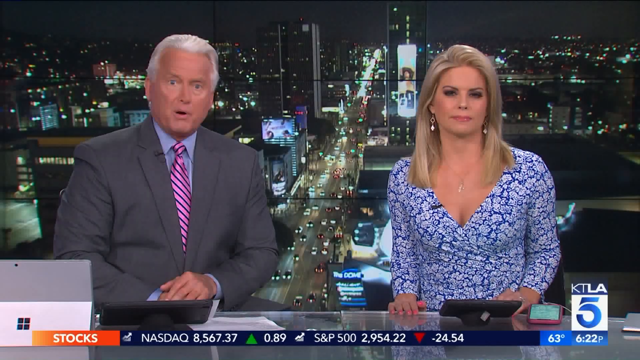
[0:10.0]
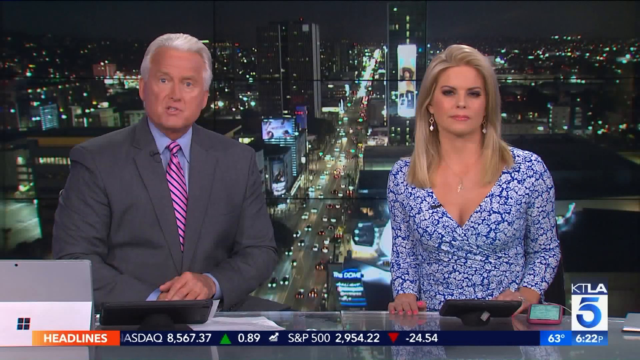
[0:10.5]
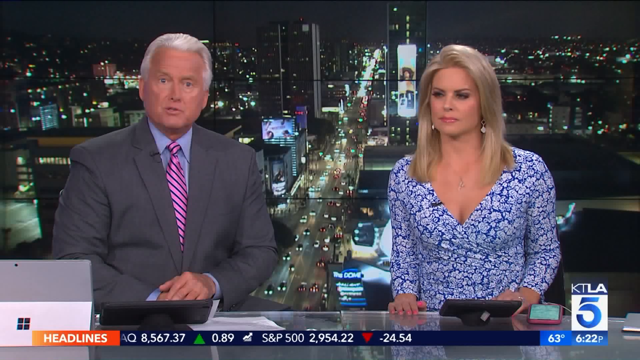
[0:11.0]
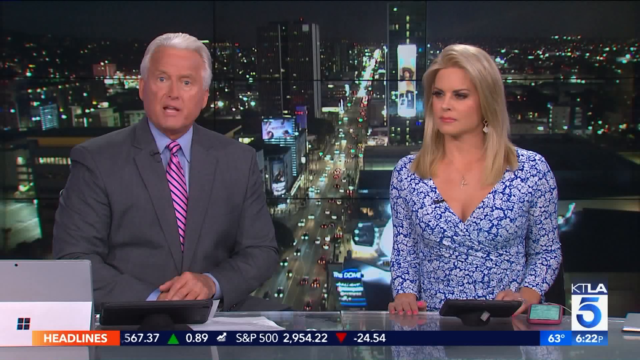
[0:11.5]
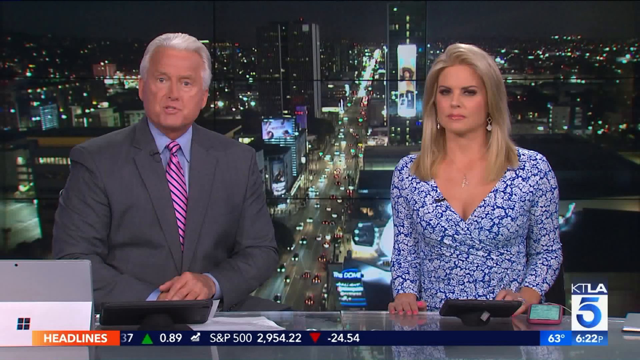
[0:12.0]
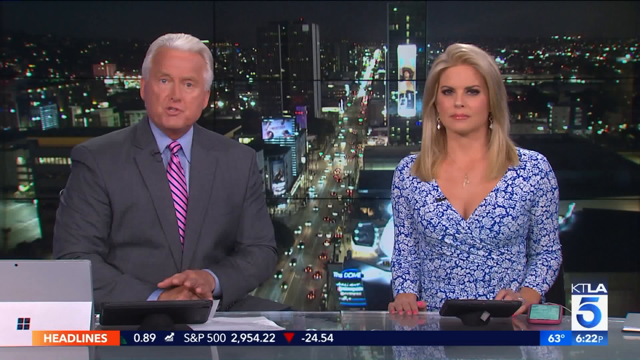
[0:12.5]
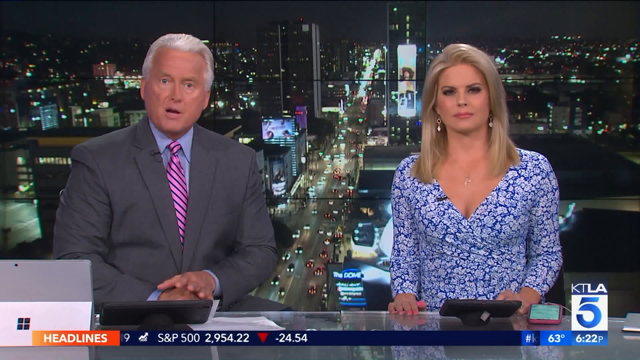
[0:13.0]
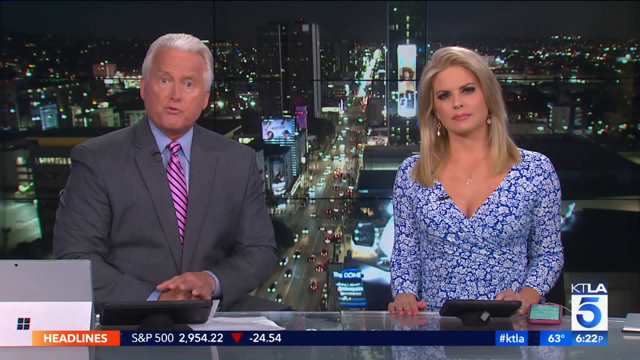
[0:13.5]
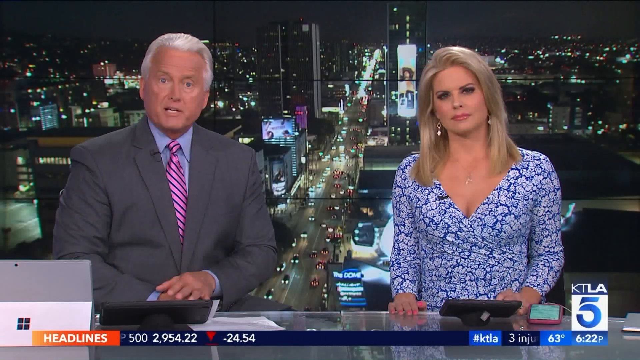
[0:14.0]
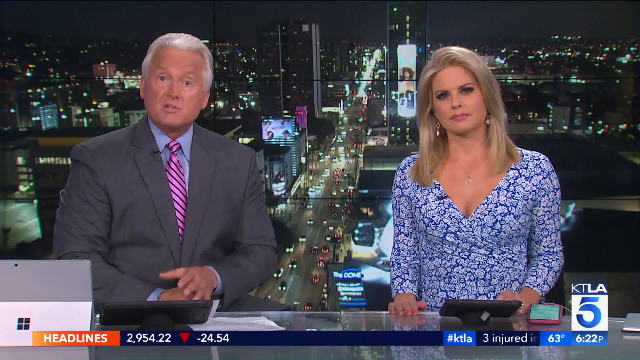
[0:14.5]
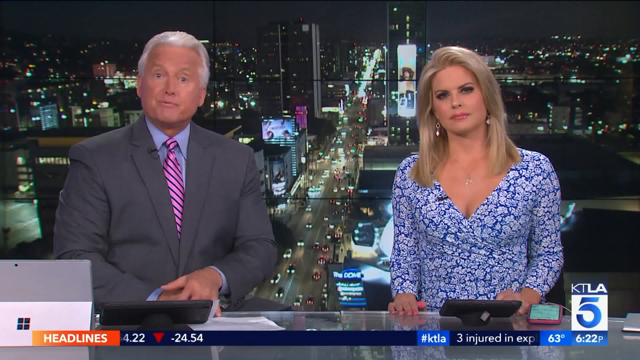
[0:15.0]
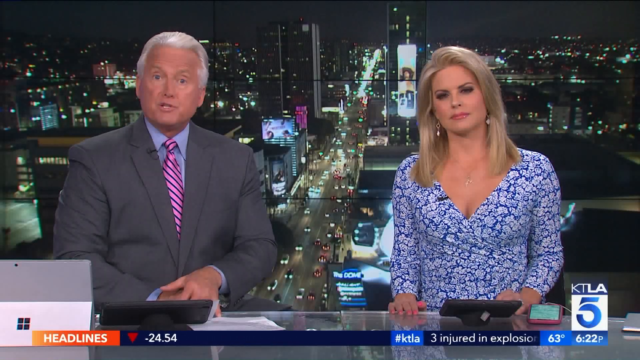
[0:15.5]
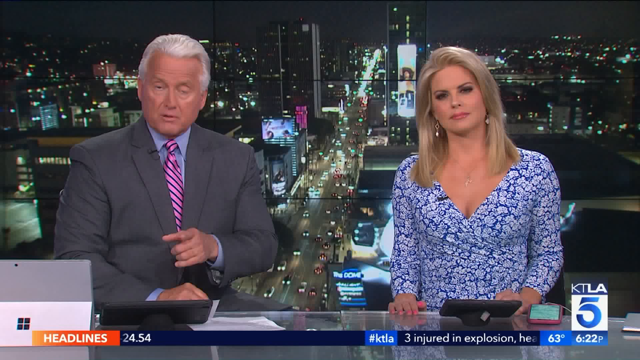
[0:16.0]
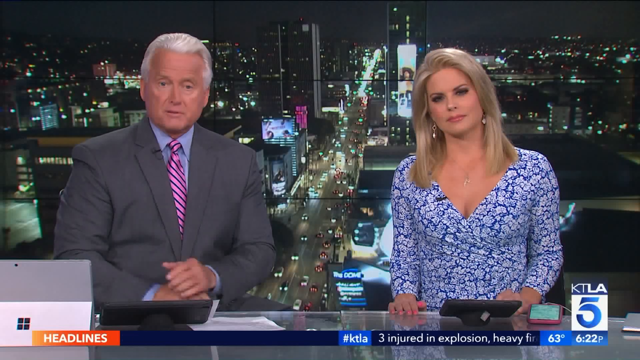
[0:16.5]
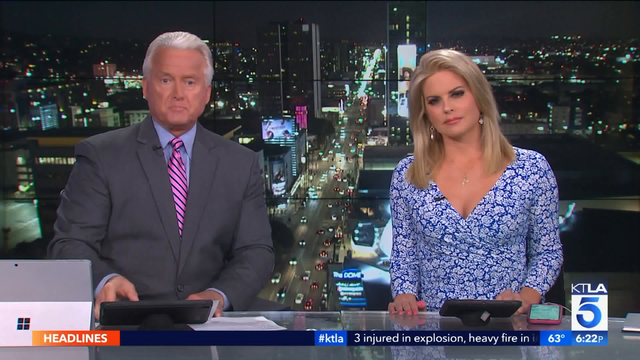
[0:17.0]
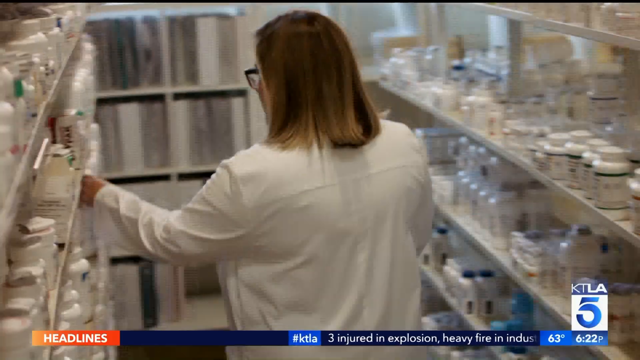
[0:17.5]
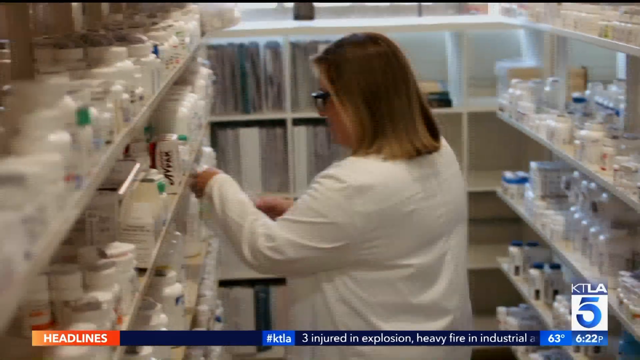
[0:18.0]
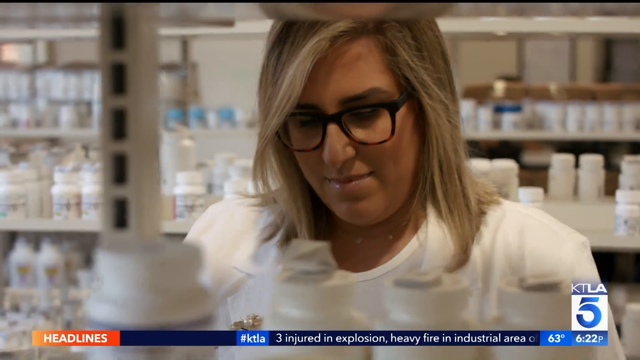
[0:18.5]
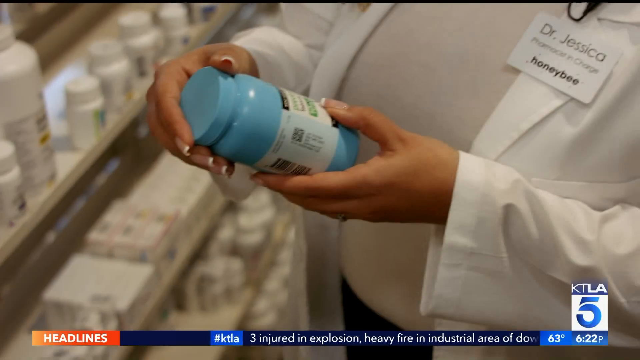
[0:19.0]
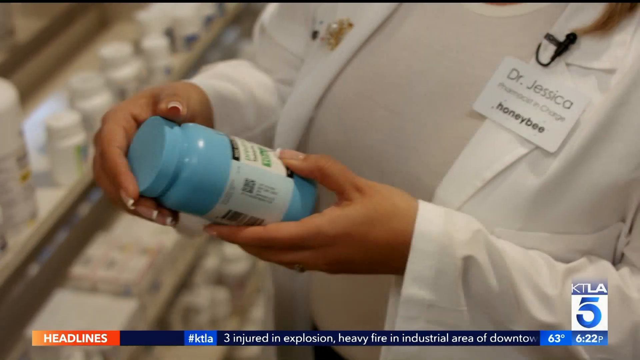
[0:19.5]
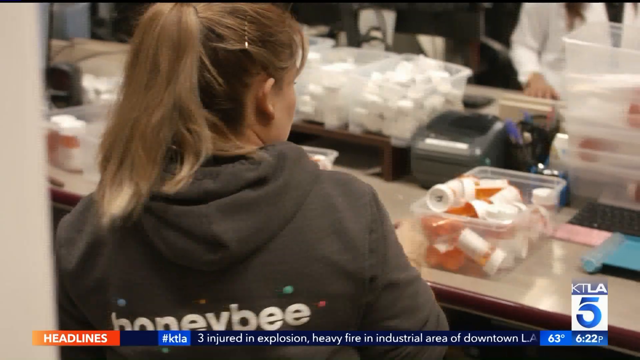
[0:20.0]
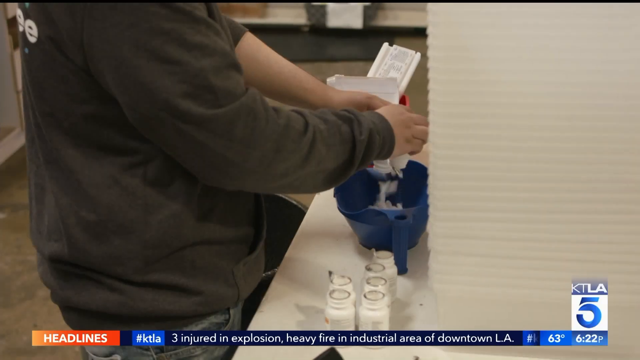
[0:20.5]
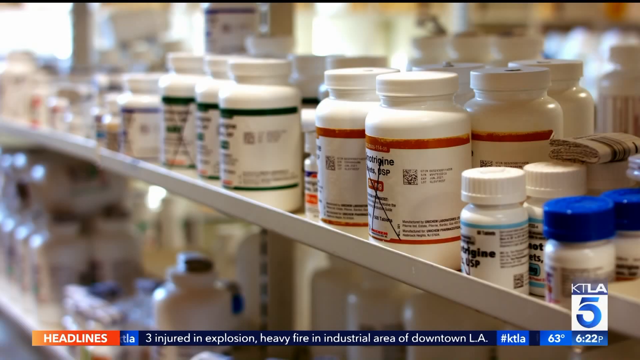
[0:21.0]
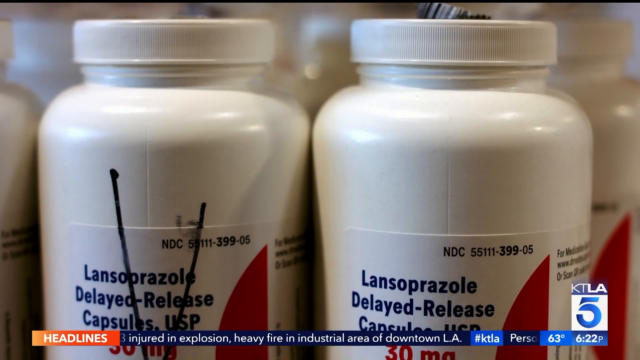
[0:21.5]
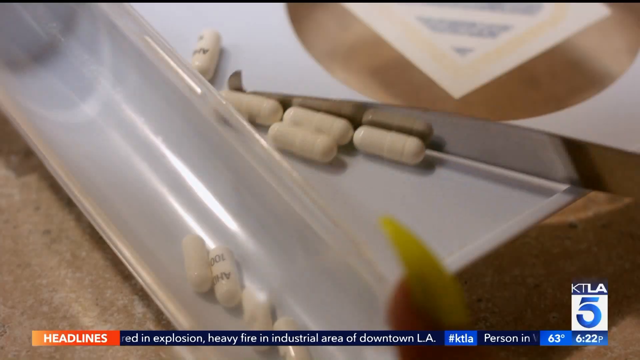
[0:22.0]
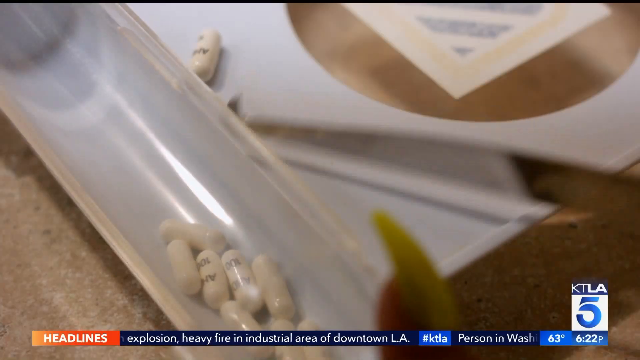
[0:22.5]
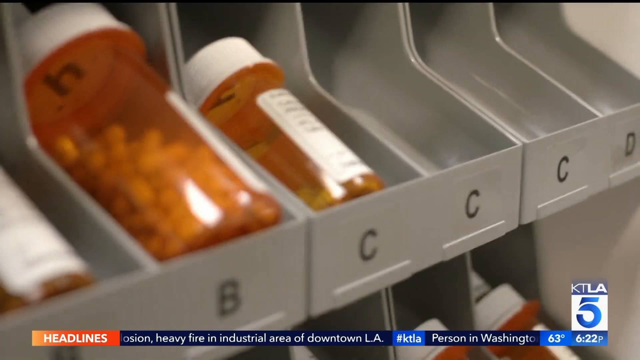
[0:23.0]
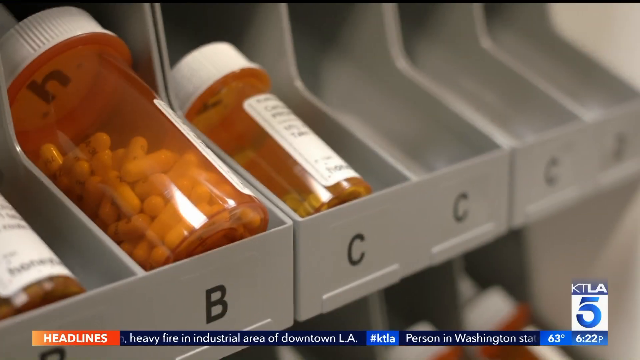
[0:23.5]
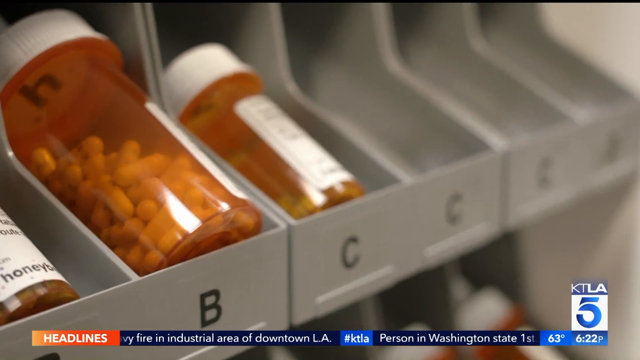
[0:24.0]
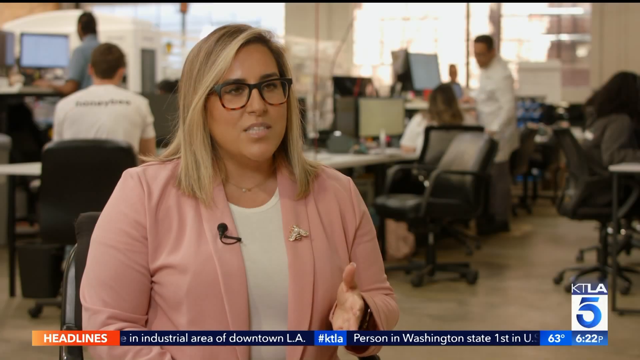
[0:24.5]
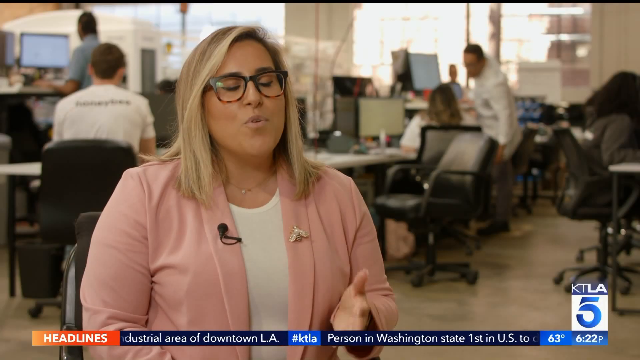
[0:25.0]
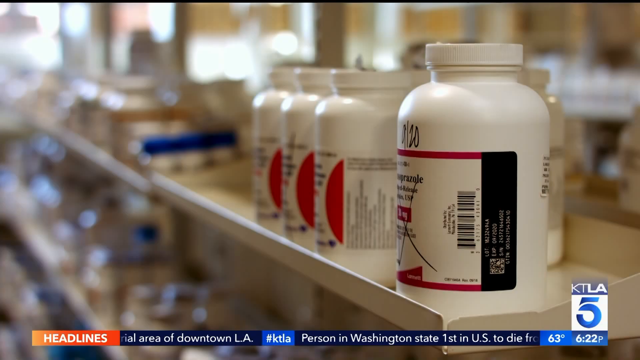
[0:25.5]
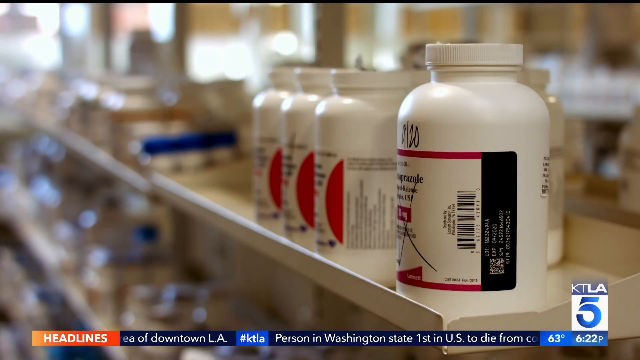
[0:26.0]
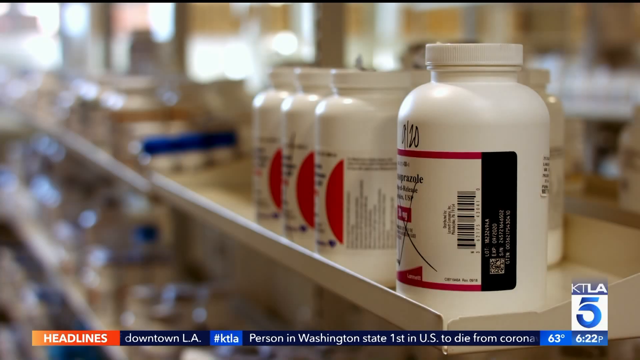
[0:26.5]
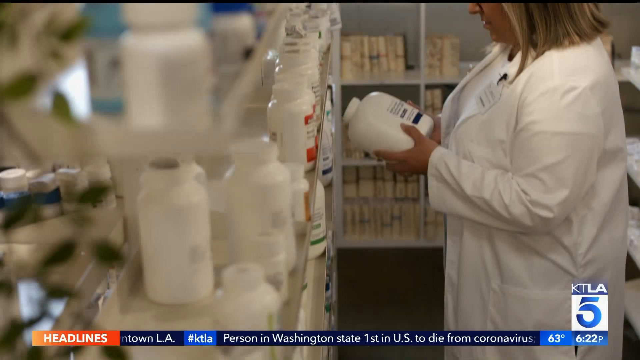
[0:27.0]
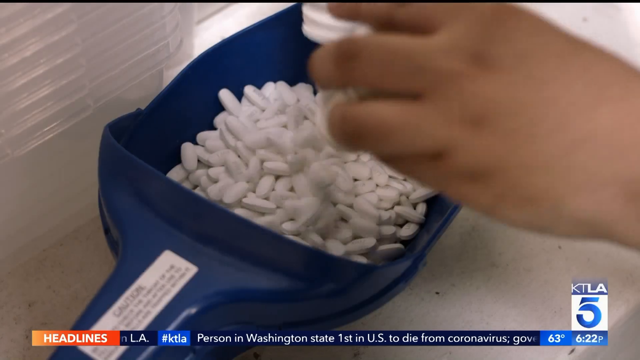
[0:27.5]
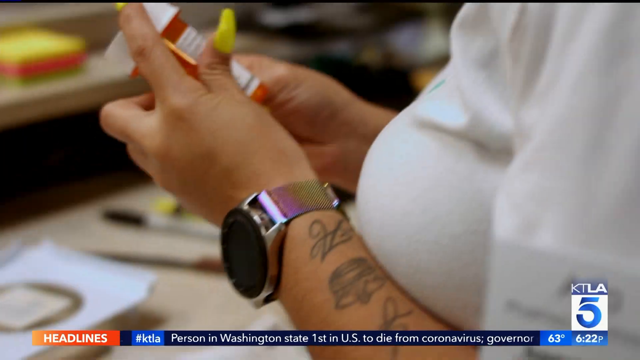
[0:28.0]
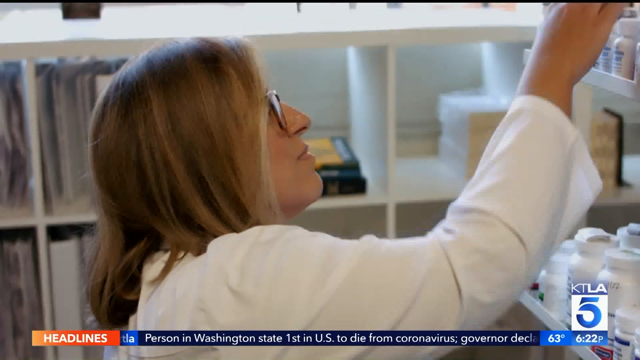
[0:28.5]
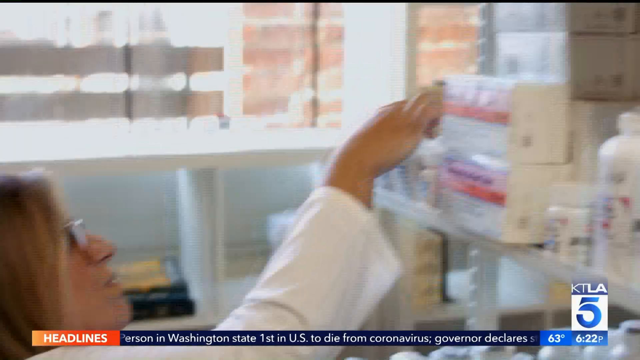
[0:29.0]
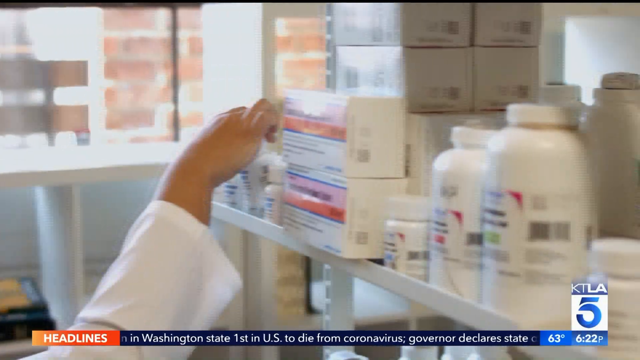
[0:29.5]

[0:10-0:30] The male and female news anchors sit at the desk. The man is talking; his hands are folded on top of each other before he lifts one and points off to move the segment on. The scene shifts to a pharmacy with rapid-fire shots of people sorting and counting pills. A woman with large-frame glasses appears in a white lab coat. The images show many pharmacy products, pill bottles on shelves, and pills being dumped out. A pharmacist picks up a blue bottle. The same woman then appears in a pink blazer, sitting in what appears to be a call center, where people wear white shirts that read "honeybee". The shots change very quickly, none lasting longer than about three seconds, and all show pill bottles or things seen or used in a pharmacy.